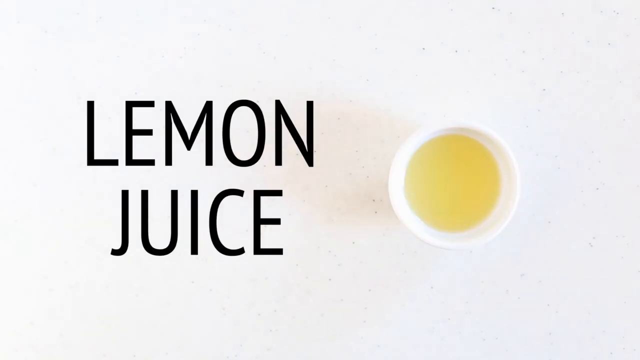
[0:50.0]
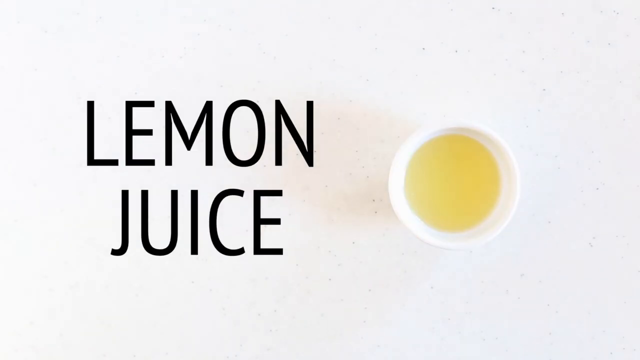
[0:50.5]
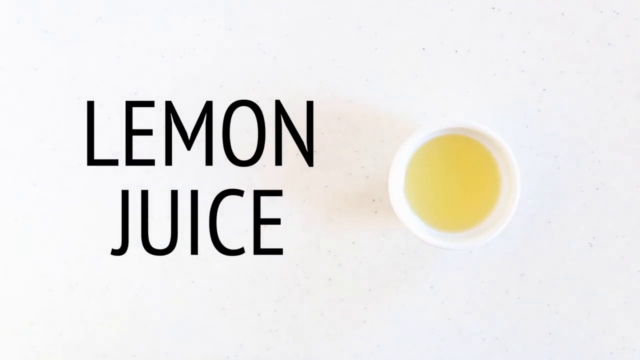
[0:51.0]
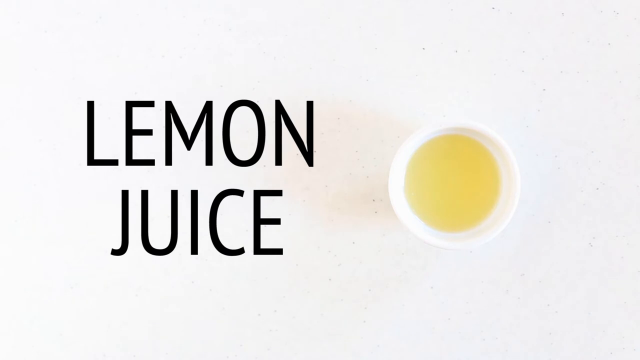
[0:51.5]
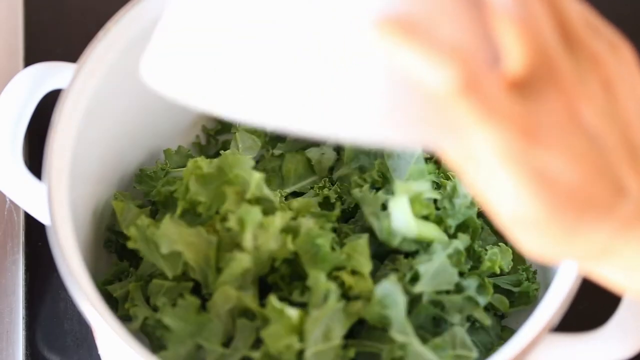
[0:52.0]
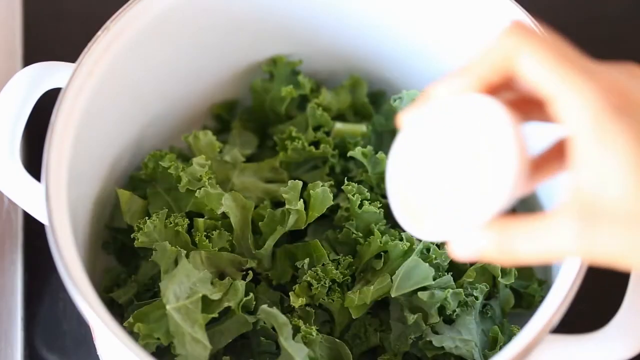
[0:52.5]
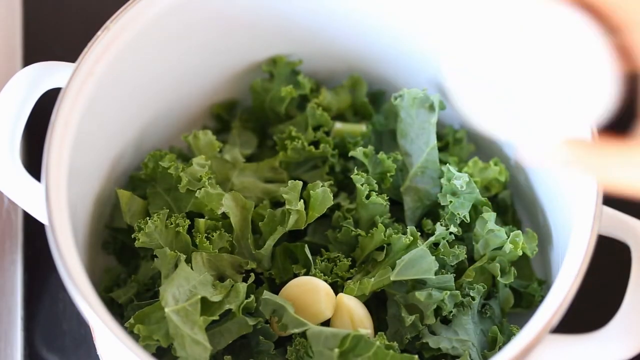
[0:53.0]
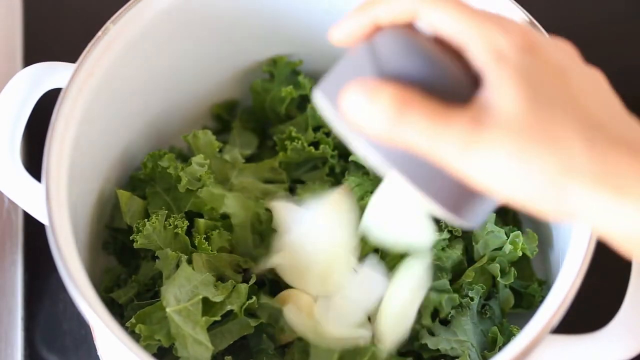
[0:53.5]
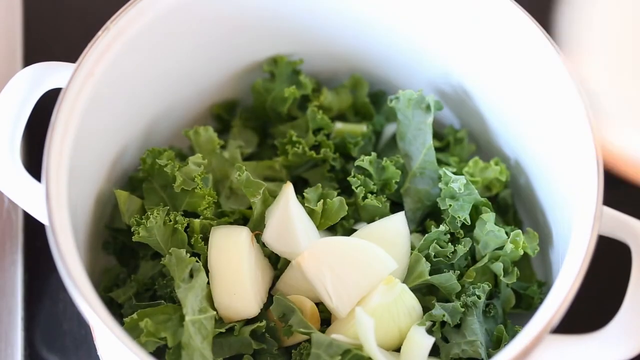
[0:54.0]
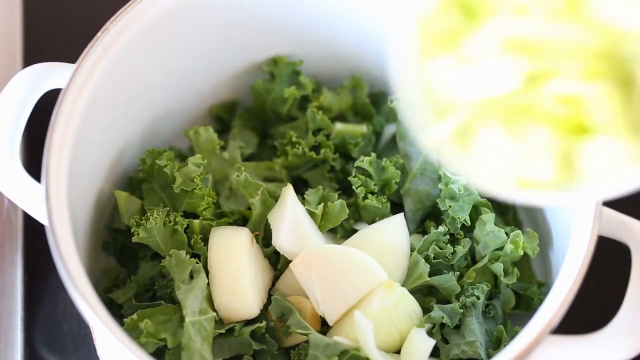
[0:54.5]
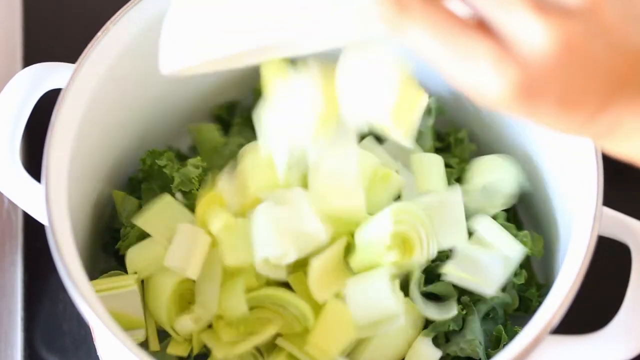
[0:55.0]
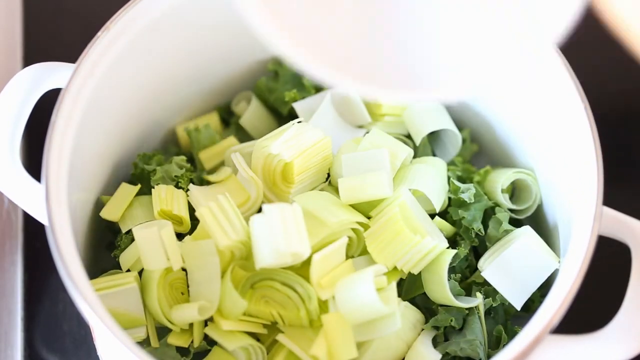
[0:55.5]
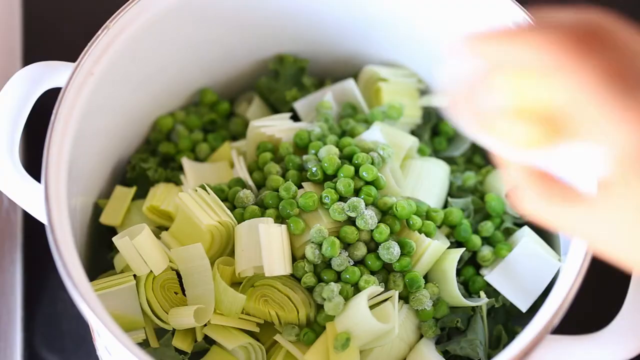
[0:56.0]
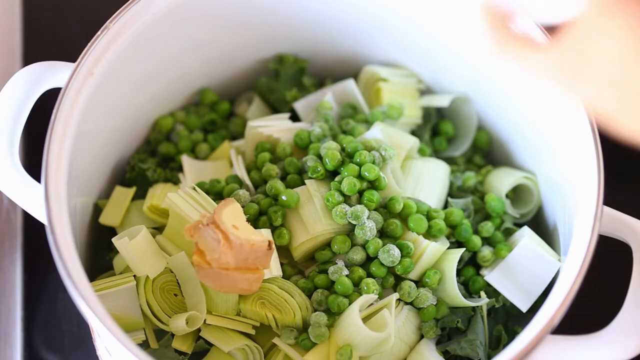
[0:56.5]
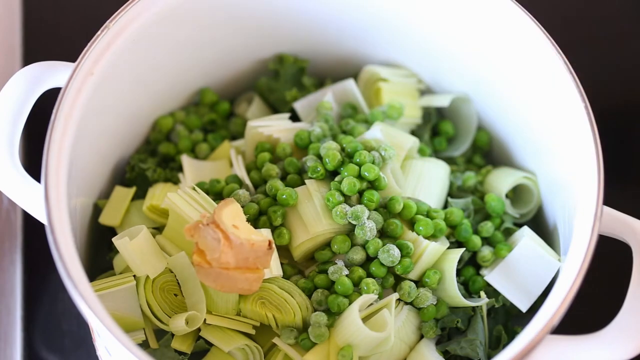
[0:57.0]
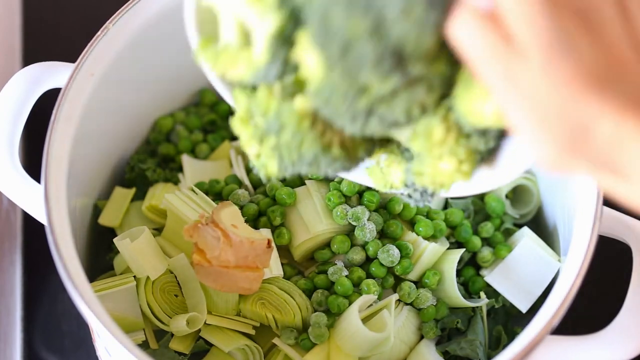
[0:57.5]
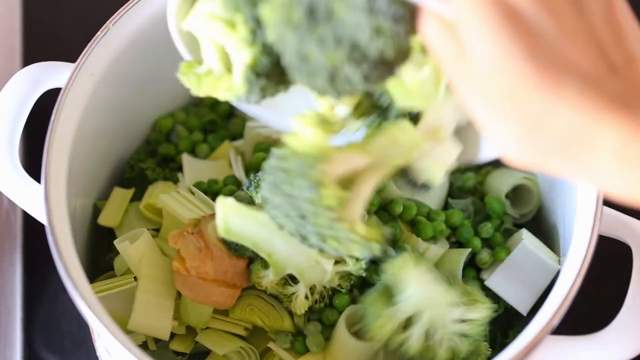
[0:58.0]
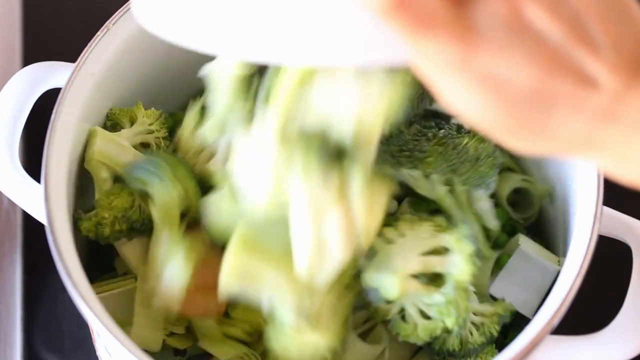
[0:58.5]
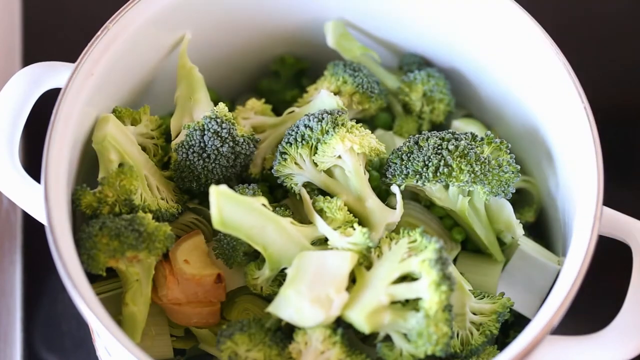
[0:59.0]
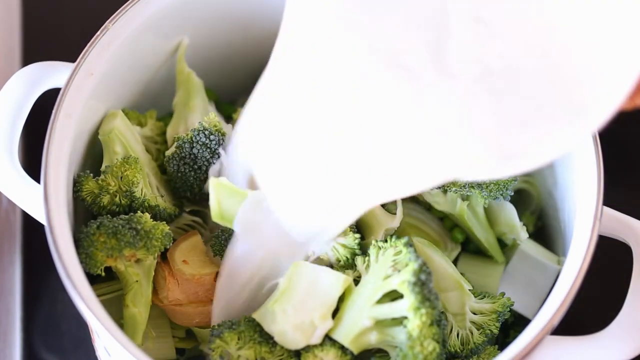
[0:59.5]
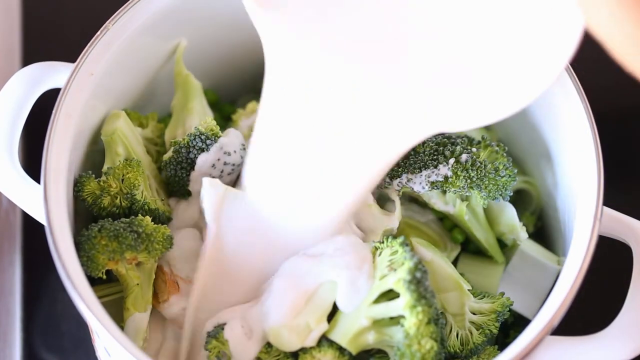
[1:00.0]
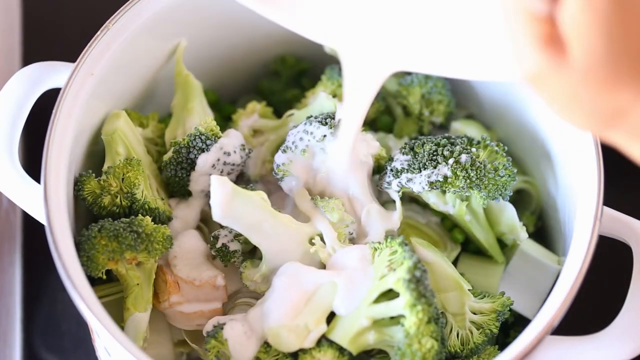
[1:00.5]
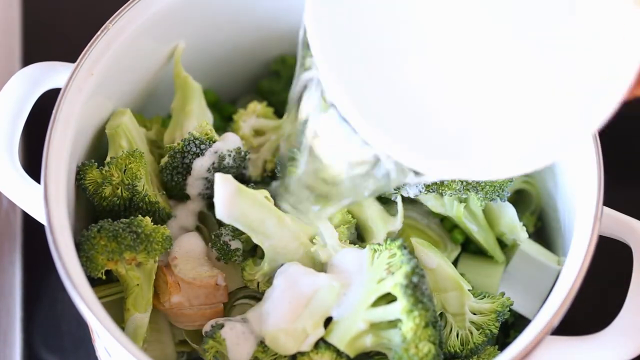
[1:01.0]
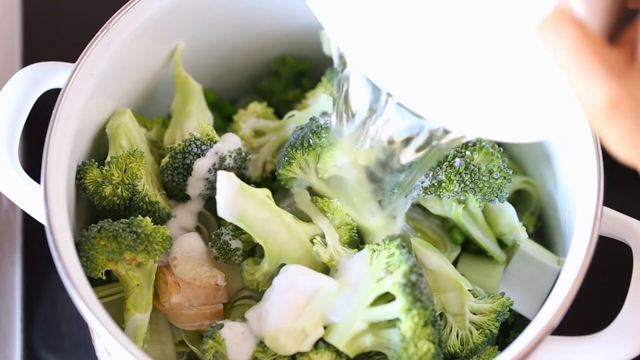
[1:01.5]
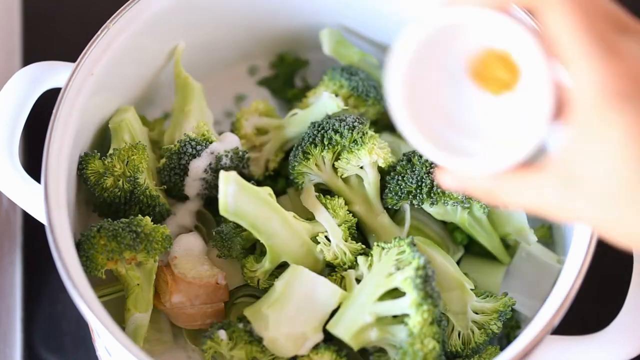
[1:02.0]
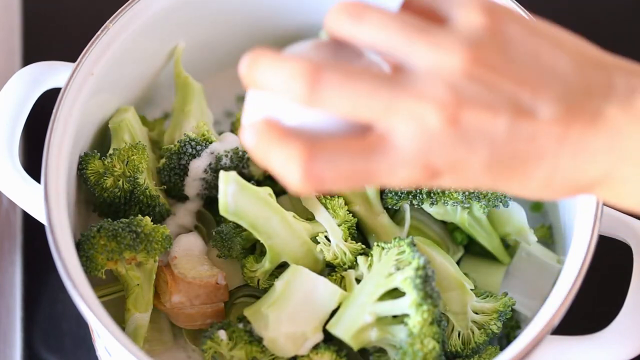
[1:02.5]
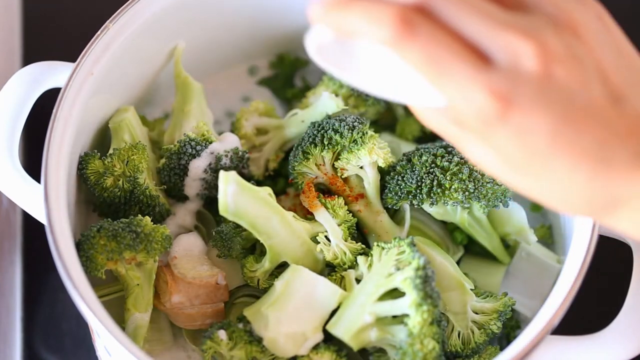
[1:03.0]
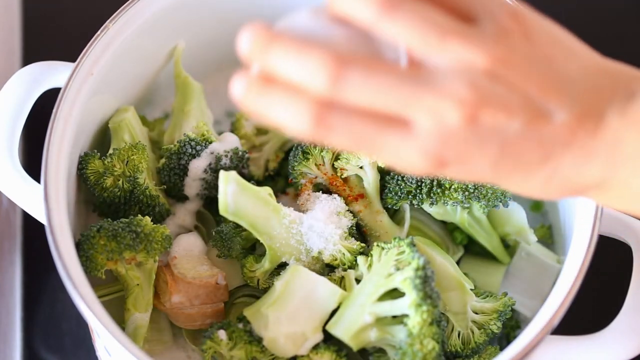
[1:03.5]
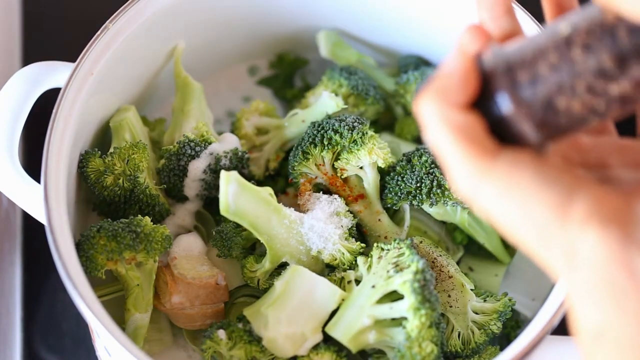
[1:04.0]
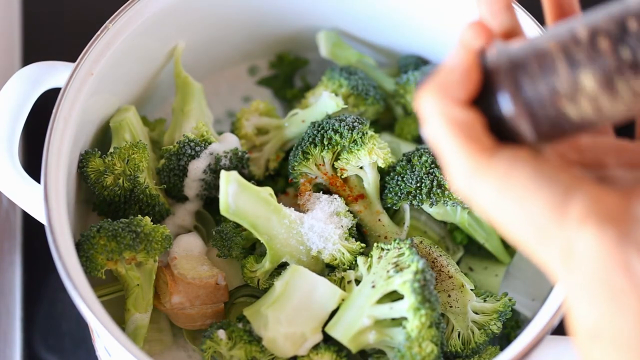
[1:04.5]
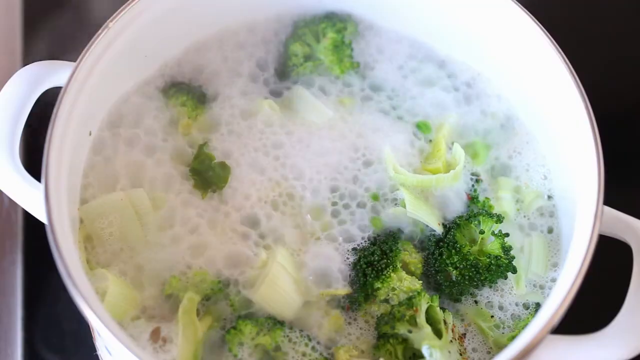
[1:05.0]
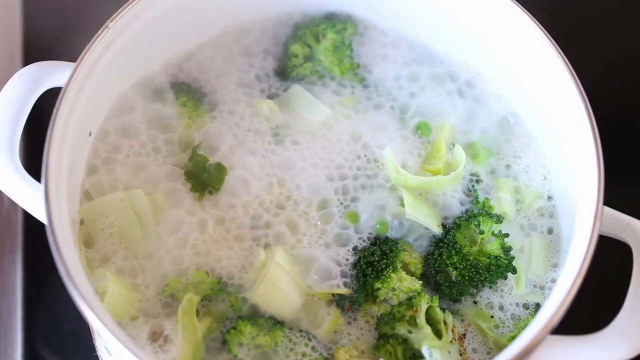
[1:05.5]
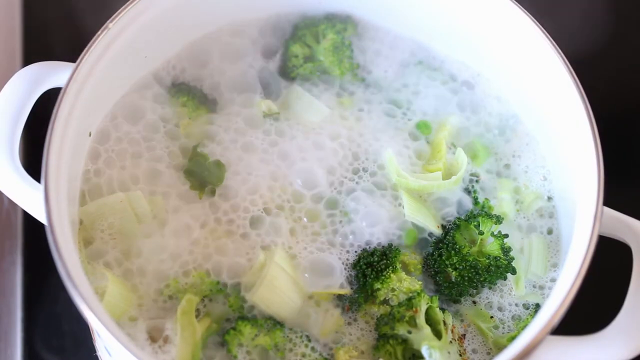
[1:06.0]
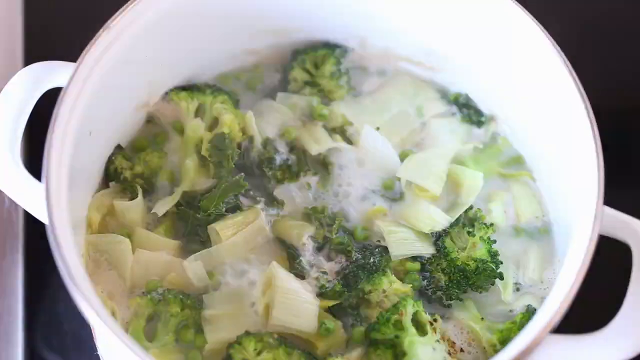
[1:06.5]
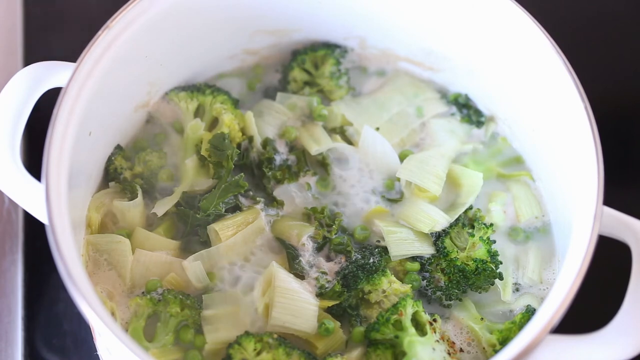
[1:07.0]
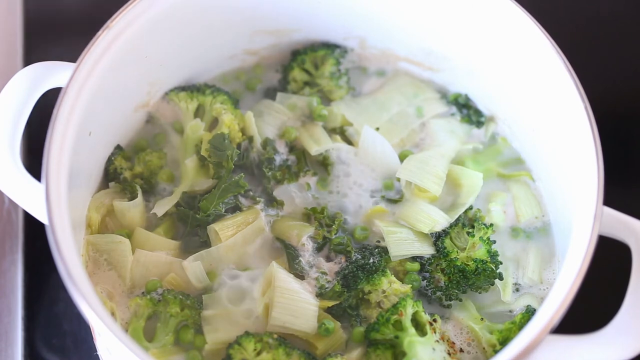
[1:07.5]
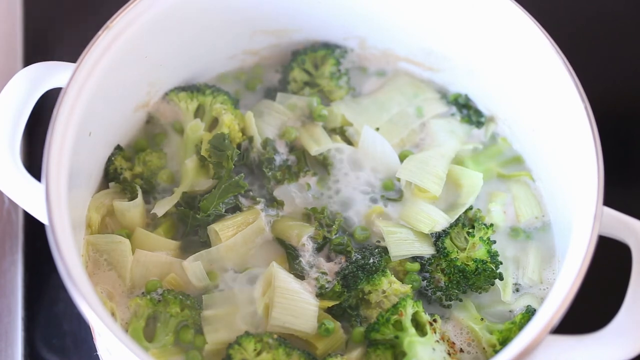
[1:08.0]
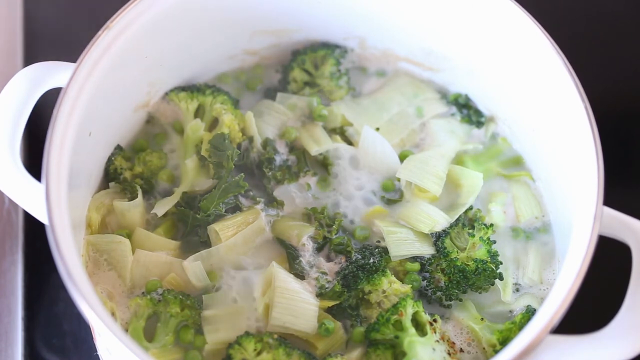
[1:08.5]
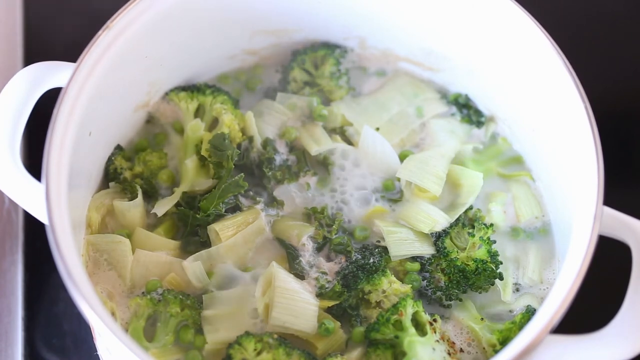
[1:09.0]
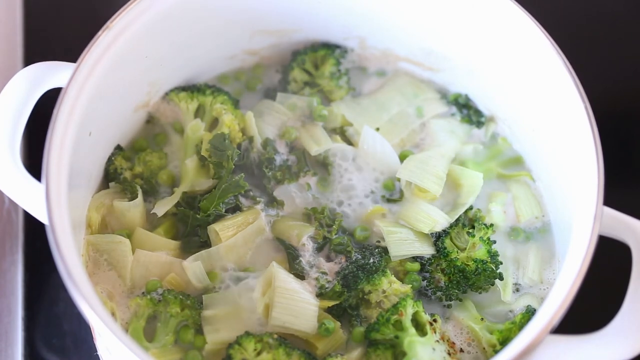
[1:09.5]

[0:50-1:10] The camera stays fixed on the image of the lemon juice. The woman then adds the ingredients into a white pot: the kale, the garlic, and all the other ingredients go in one at a time, ending with the pepper being mashed over the ingredients. The water starts to boil, and as it boils it evaporates, leaving less water in the bowl. All of this happens at a very fast speed. The full pot is not visible, only its handles, and the type of stove cannot be seen; only the boiling water is shown. No timer is visible.